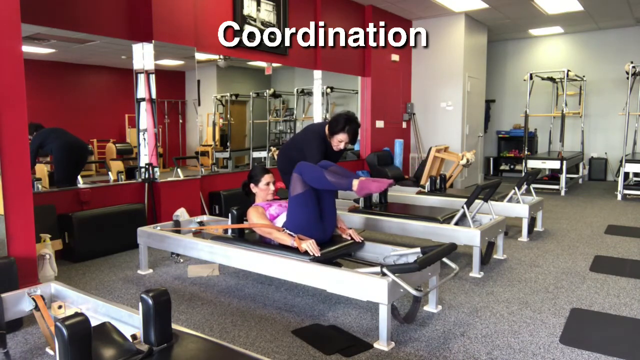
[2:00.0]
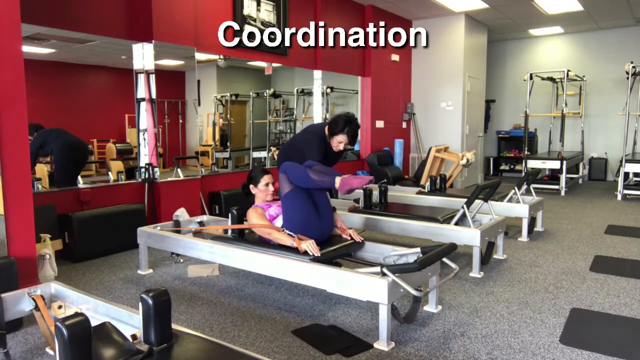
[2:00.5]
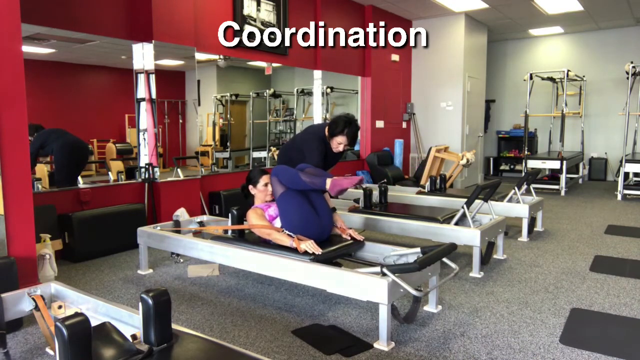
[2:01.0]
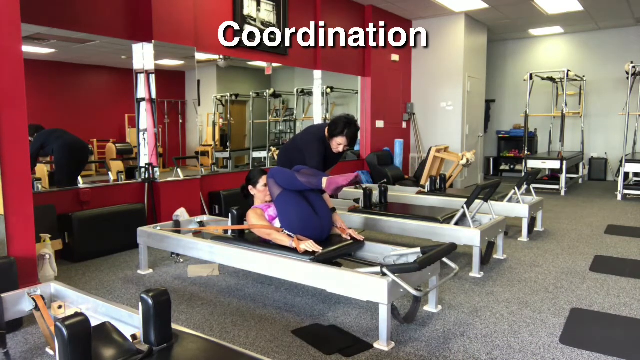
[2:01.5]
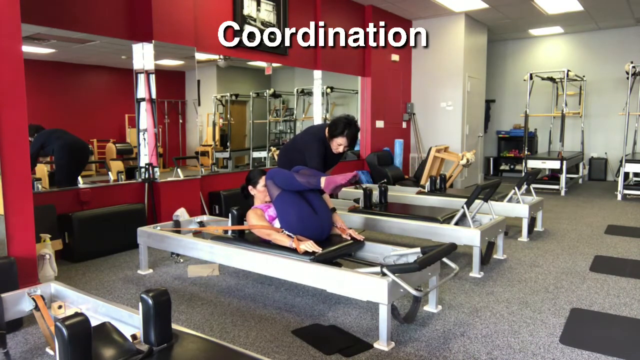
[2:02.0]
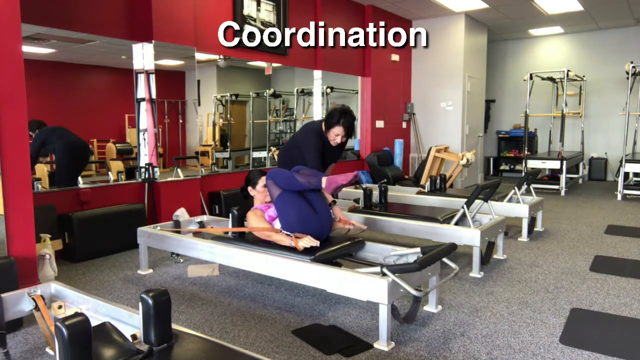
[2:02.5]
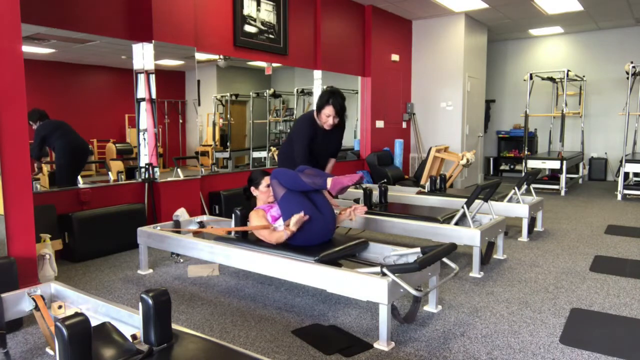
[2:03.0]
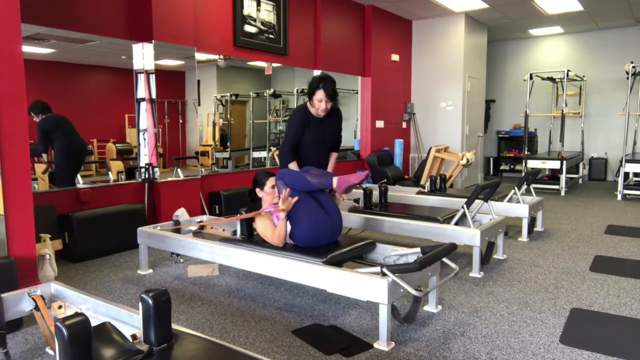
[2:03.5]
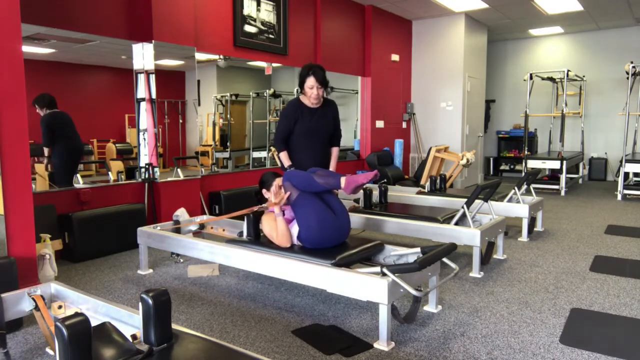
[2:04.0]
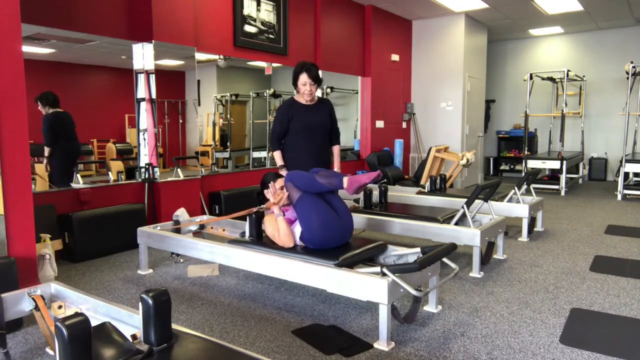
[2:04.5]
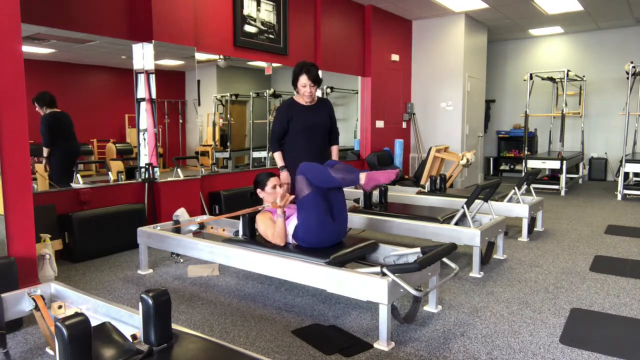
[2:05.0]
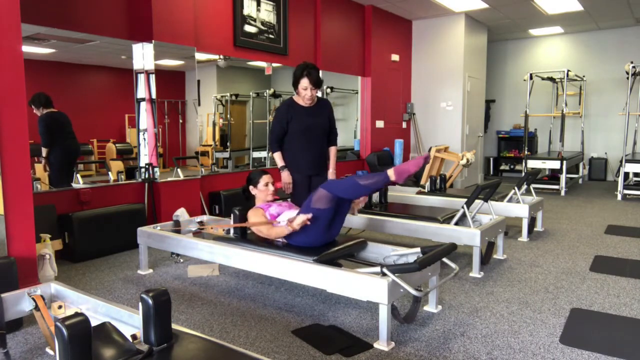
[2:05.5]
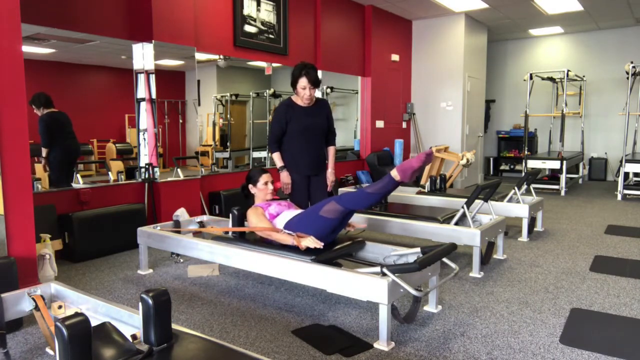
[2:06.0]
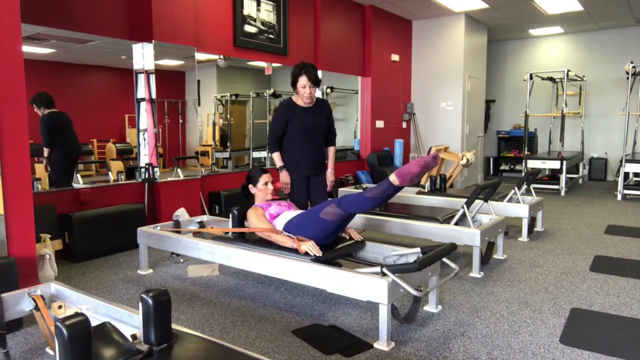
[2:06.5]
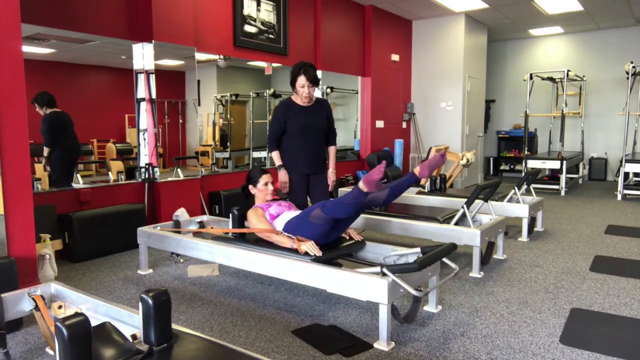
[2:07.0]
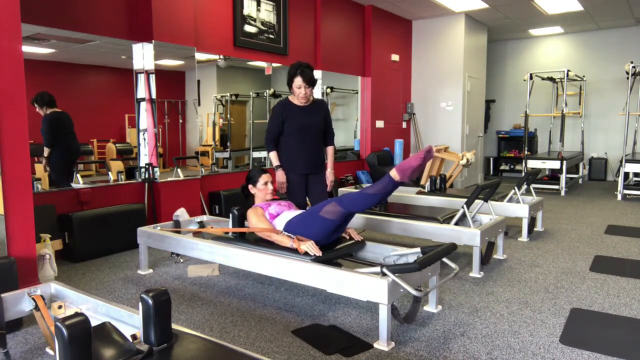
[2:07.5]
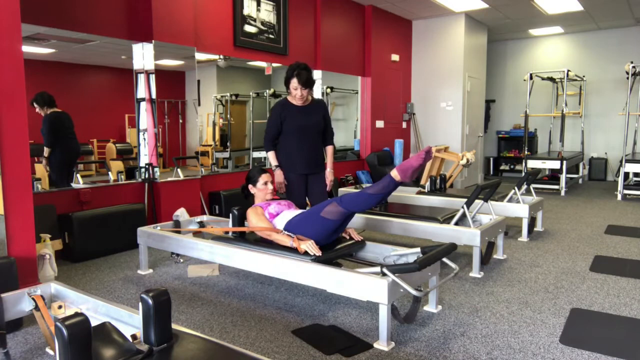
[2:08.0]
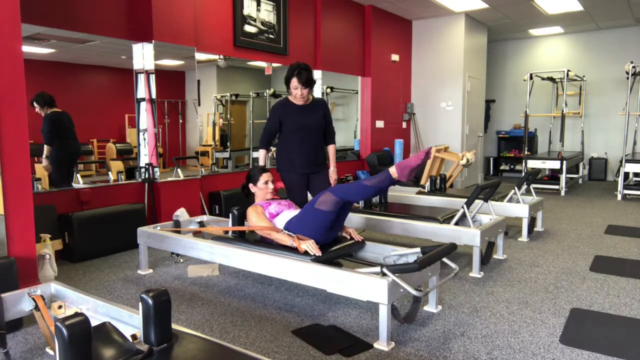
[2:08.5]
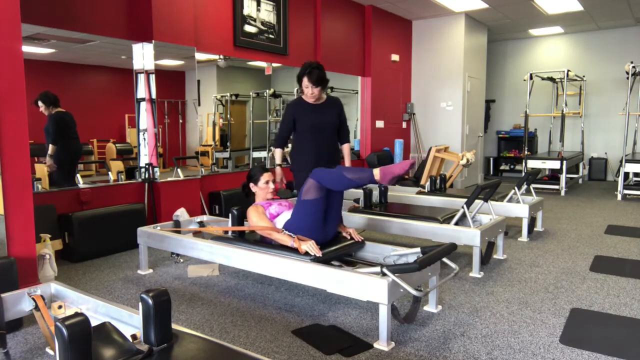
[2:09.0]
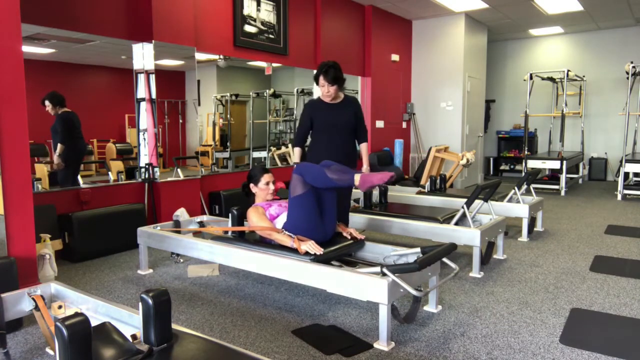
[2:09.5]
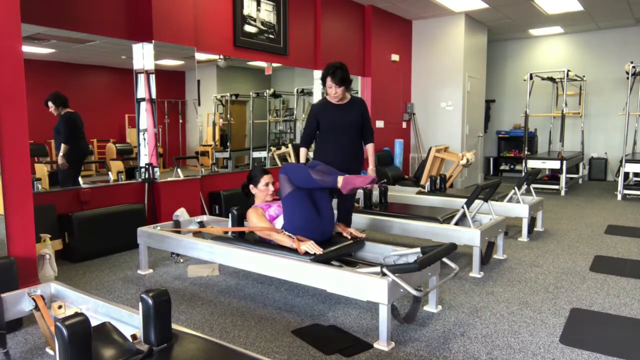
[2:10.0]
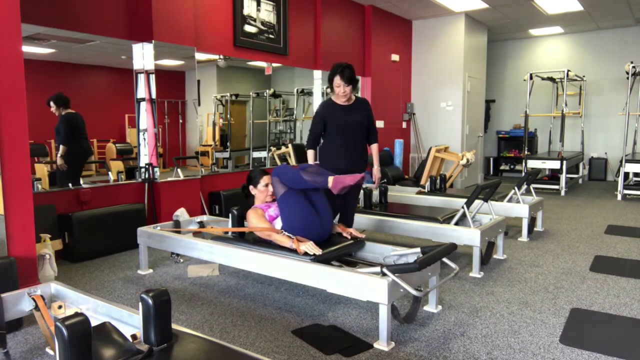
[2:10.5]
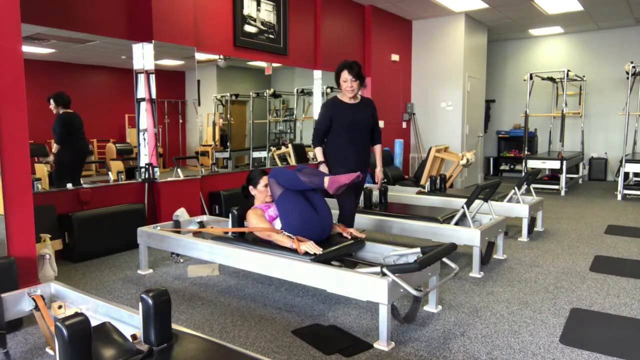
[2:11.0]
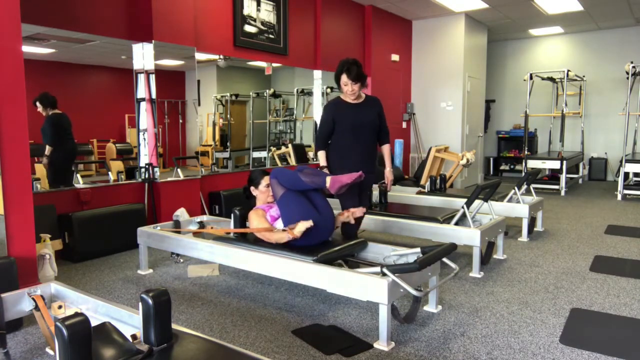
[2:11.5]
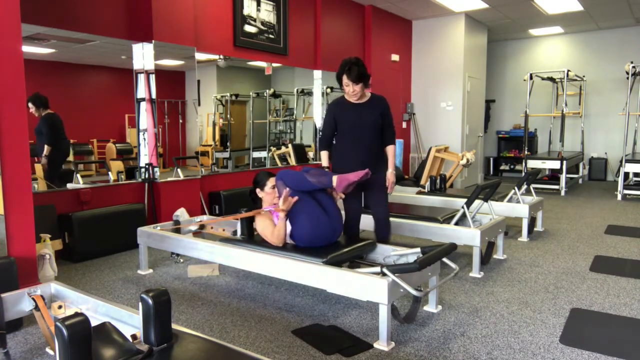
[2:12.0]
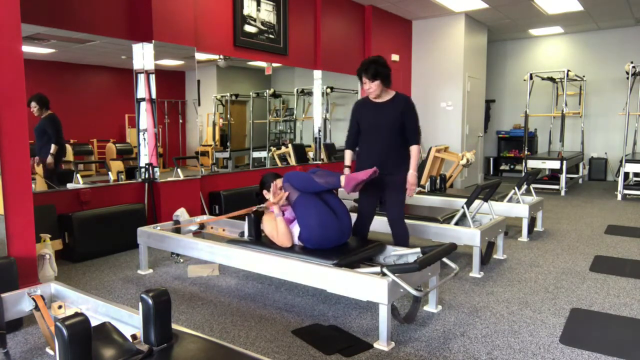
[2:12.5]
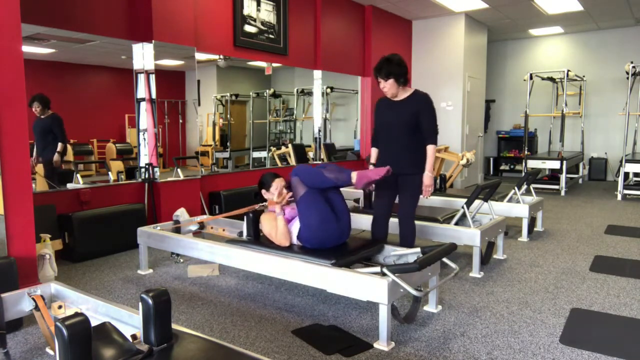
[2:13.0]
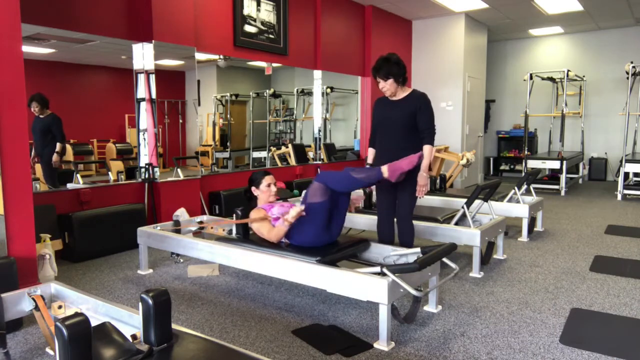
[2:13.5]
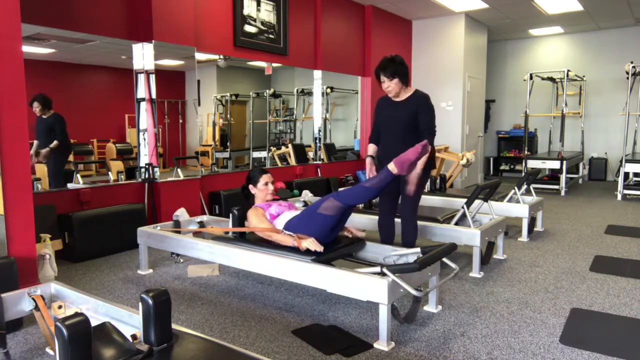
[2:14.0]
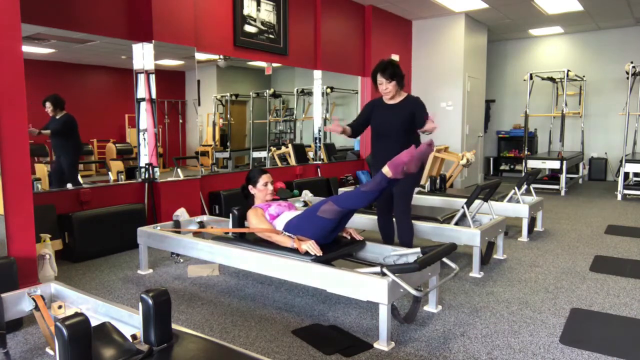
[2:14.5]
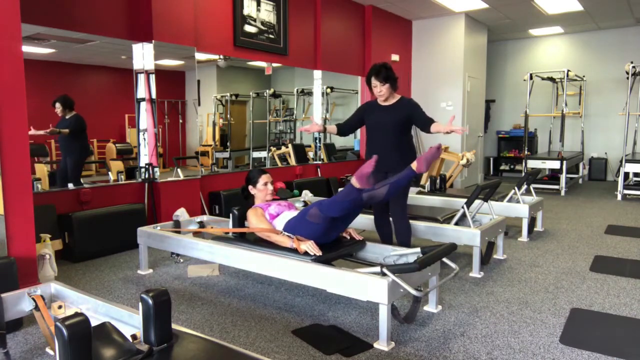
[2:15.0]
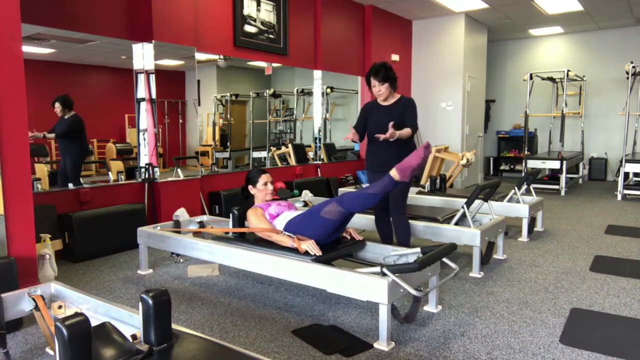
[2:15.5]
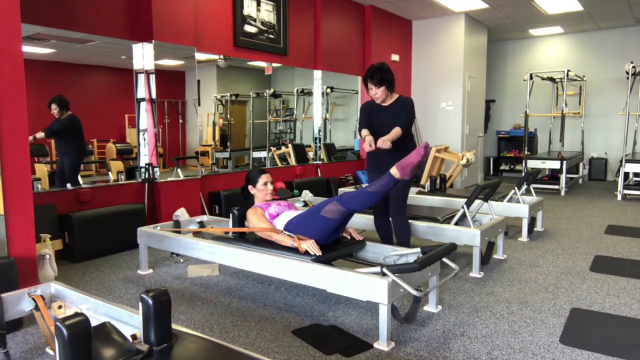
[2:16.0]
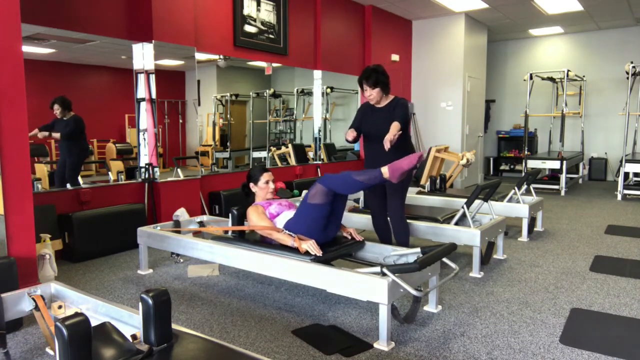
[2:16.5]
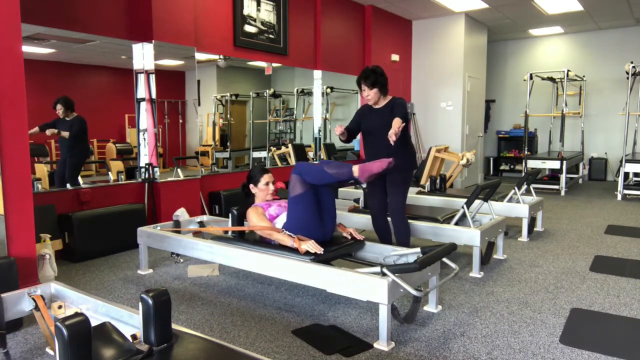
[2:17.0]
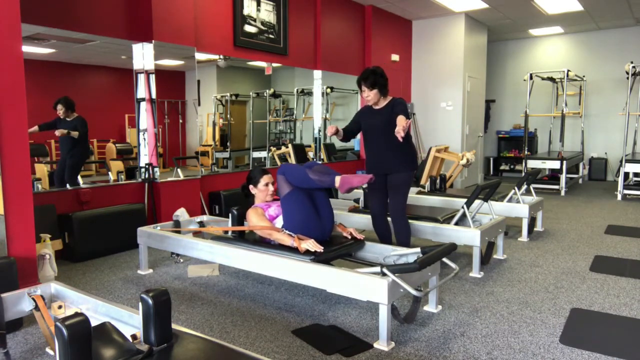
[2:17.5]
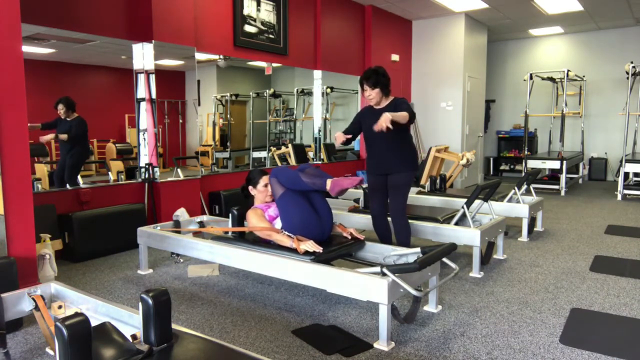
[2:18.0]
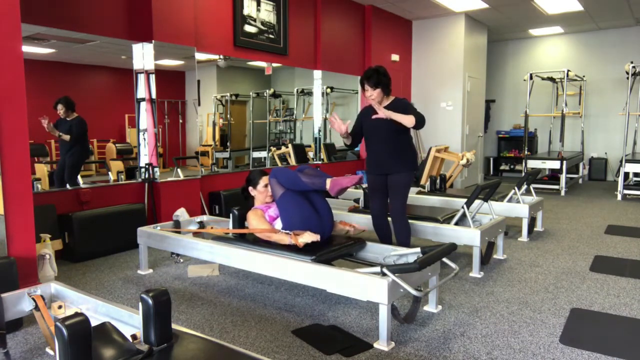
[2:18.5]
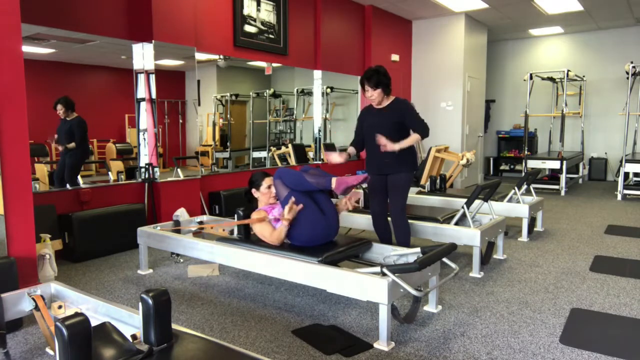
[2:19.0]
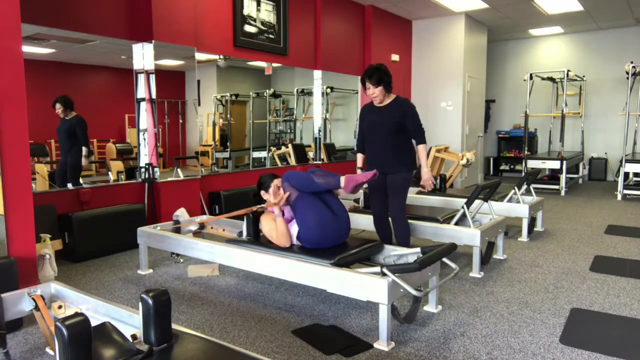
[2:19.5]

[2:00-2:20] The word "Coordination" is at the top of the screen as the tutorial continues in the Pilates studio with machines lined up against a red mirrored wall. A woman is on a reformer in the foreground, and a female instructor standing next to the reformer guides her through the exercises. The woman's head is raised off the carriage, her knees are up and bent against her face, her feet are held straight out, and her hands are in the loops of the stretch bands. She moves down slightly and pushes her hands down flat, which moves the carriage back, extends her legs out, moves her feet out and back in a scissors movement, then bends her knees up toward her face again. She performs this move a second time as the instructor stands next to her, moving her hands to guide her through the positions.